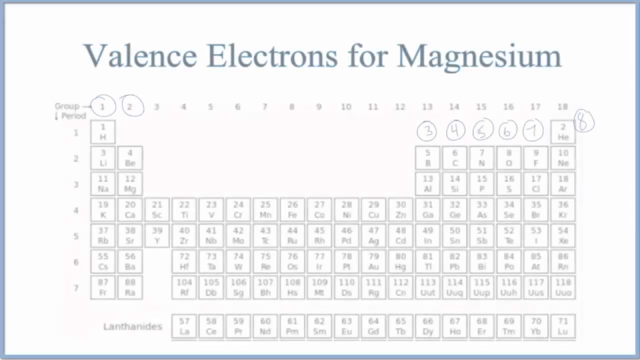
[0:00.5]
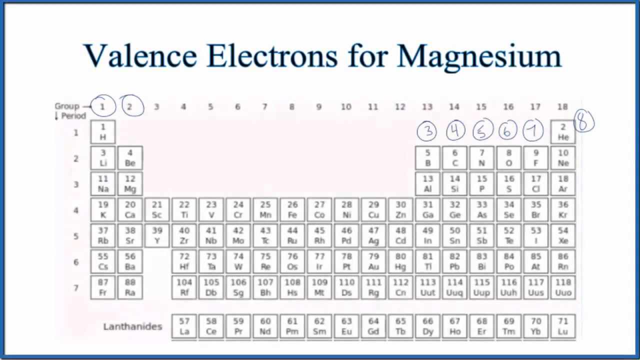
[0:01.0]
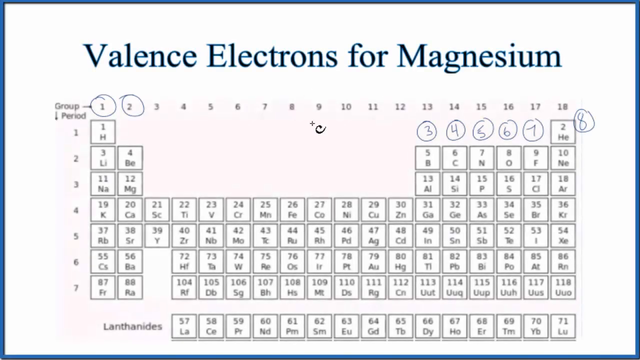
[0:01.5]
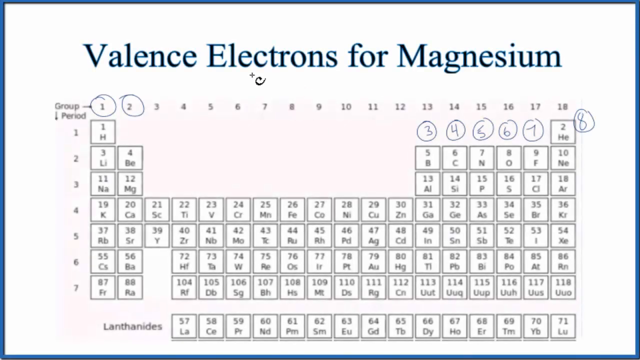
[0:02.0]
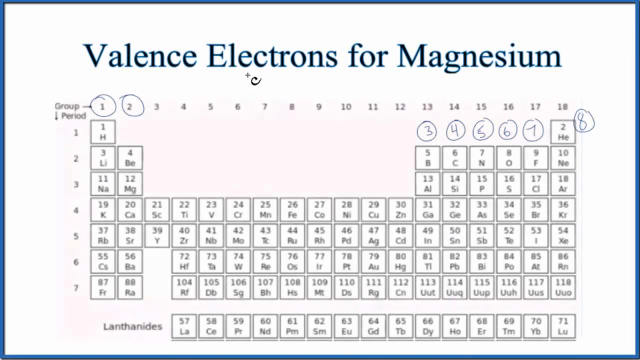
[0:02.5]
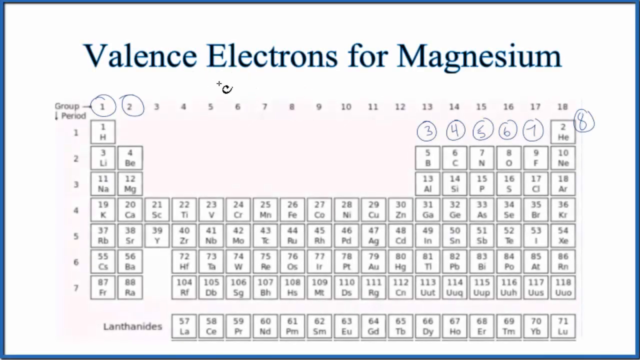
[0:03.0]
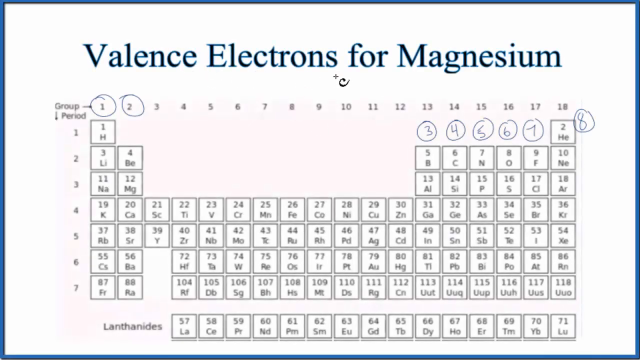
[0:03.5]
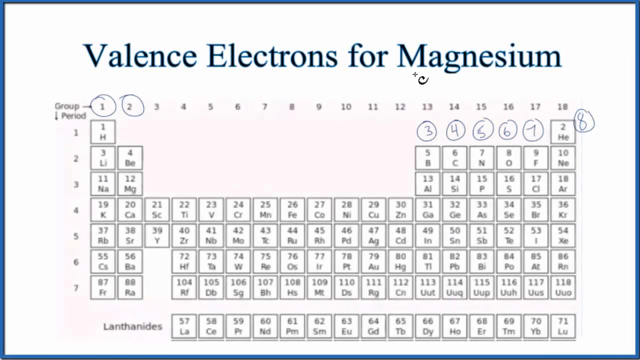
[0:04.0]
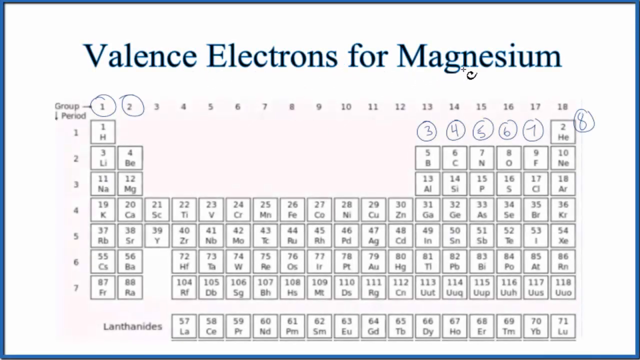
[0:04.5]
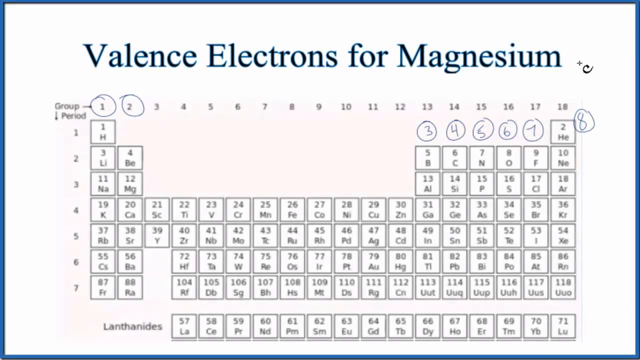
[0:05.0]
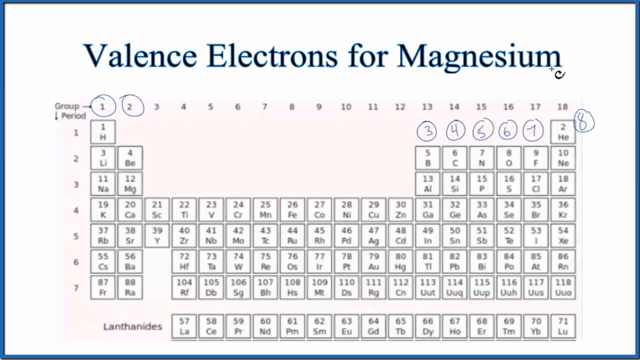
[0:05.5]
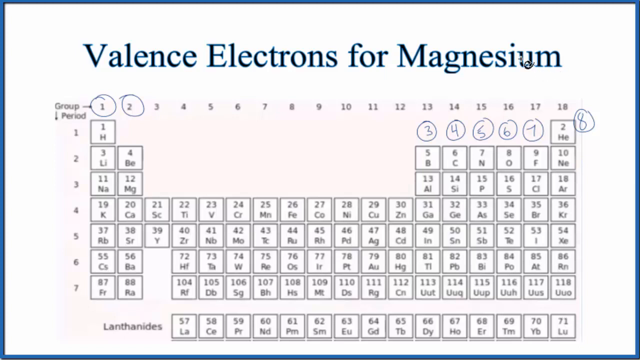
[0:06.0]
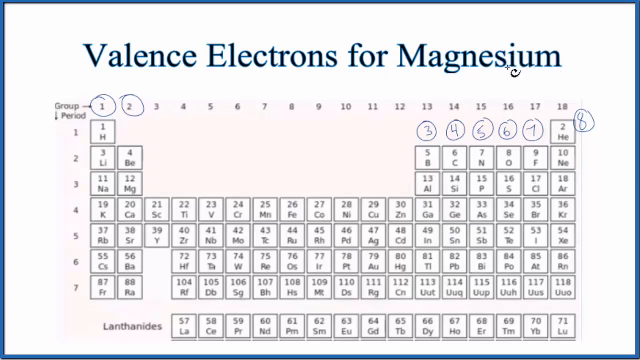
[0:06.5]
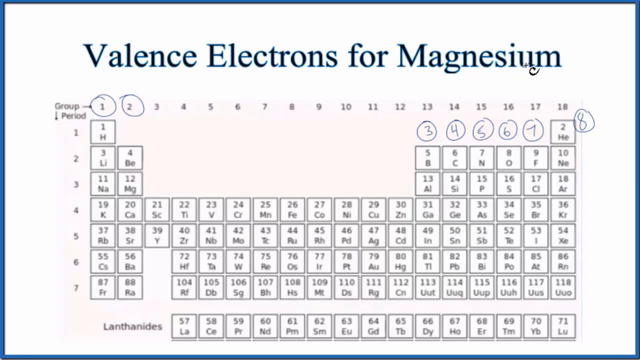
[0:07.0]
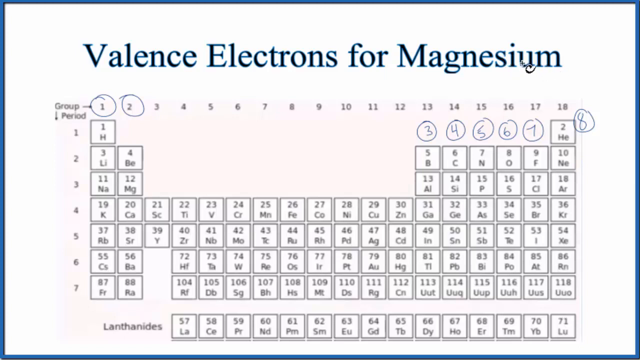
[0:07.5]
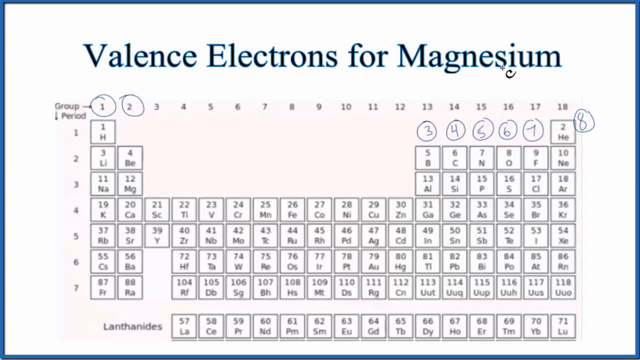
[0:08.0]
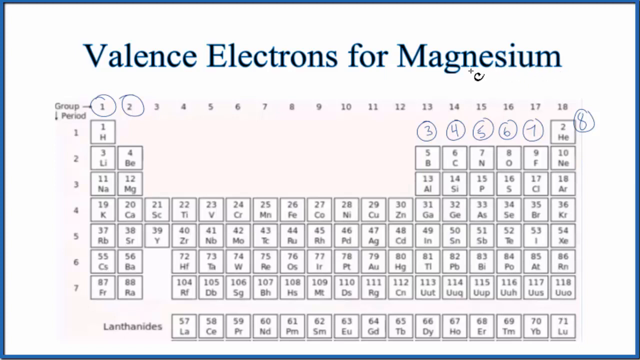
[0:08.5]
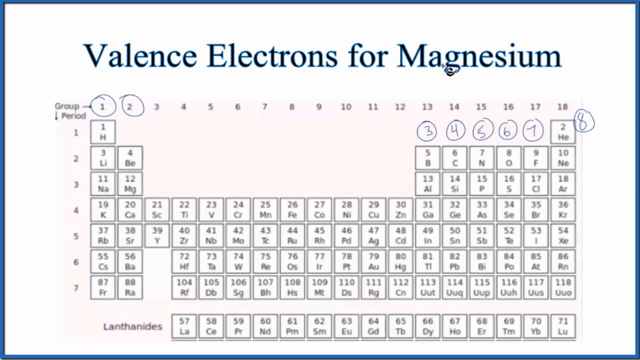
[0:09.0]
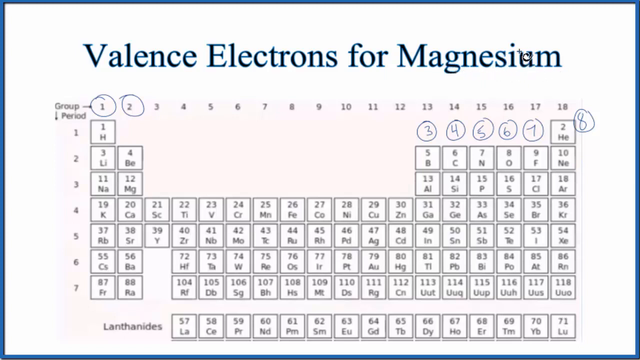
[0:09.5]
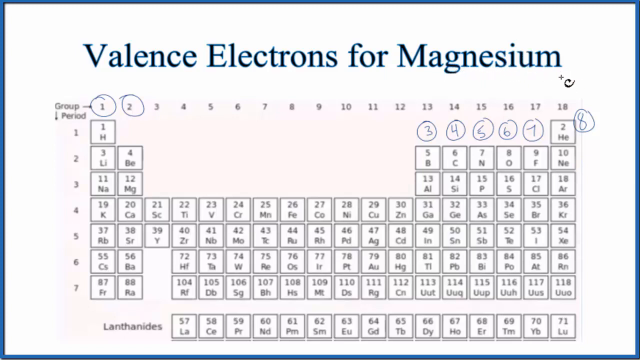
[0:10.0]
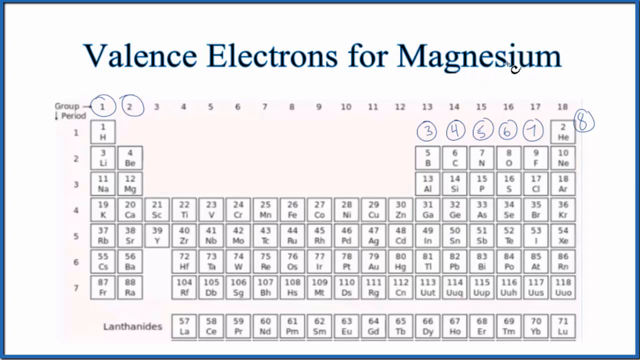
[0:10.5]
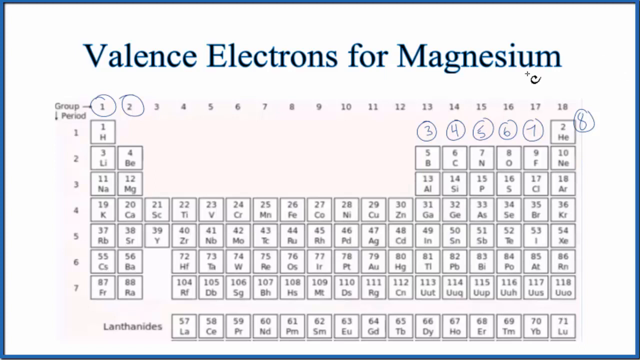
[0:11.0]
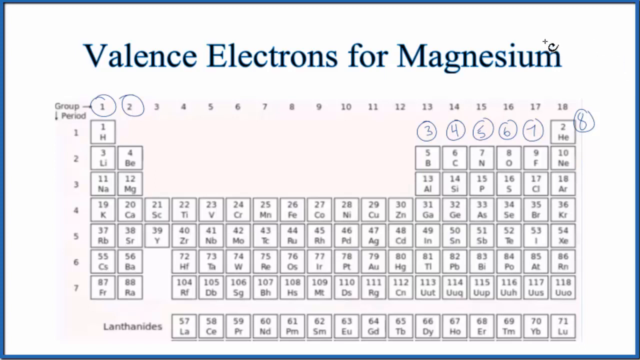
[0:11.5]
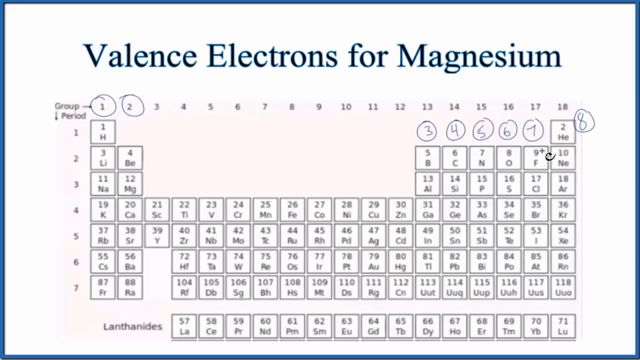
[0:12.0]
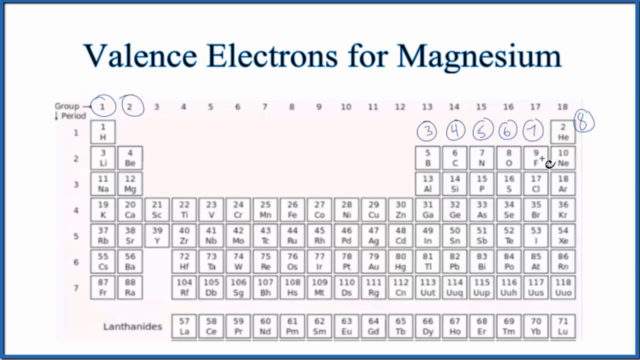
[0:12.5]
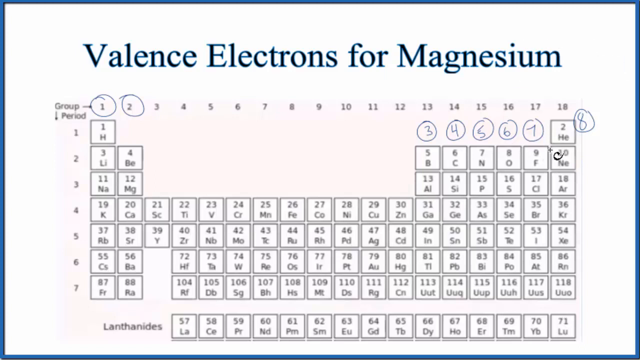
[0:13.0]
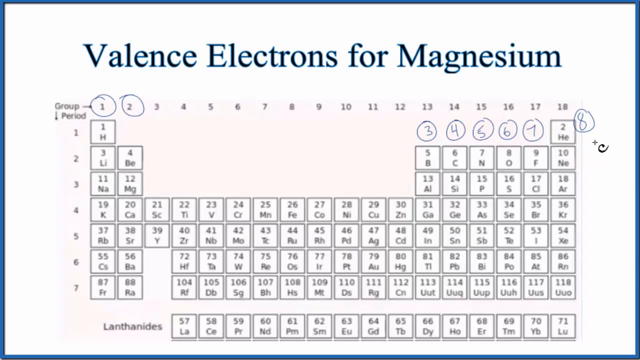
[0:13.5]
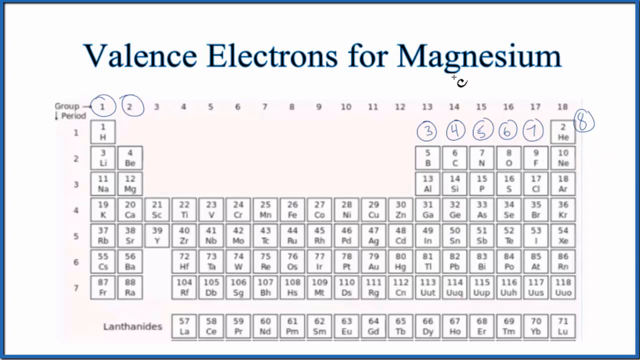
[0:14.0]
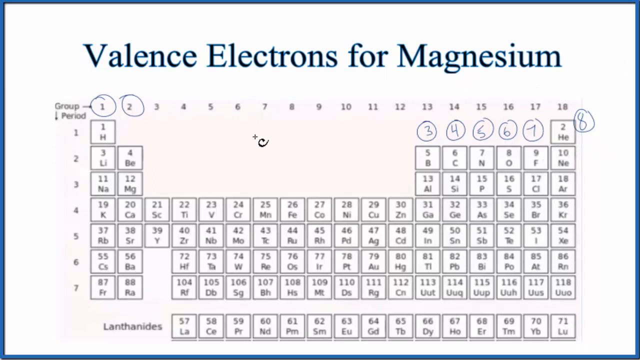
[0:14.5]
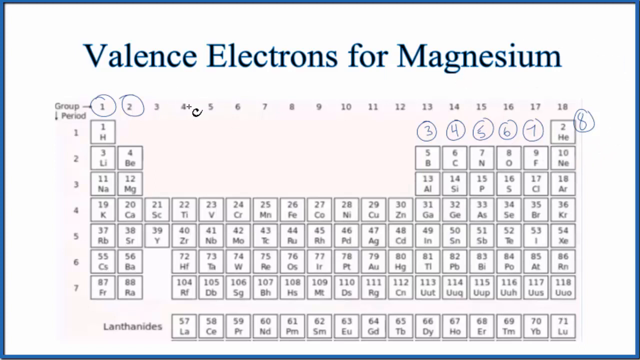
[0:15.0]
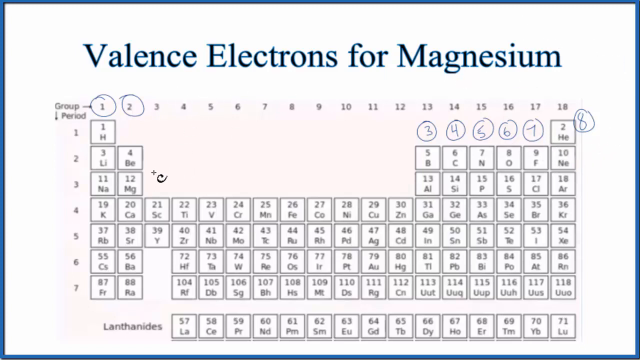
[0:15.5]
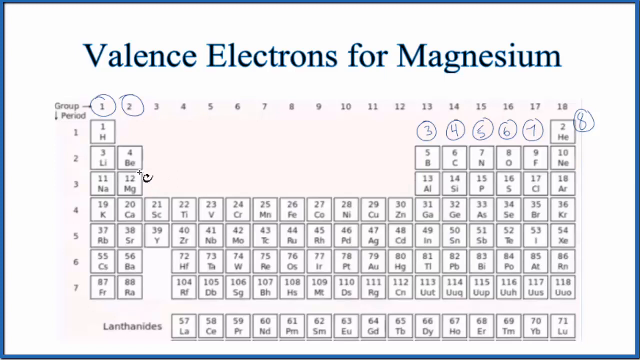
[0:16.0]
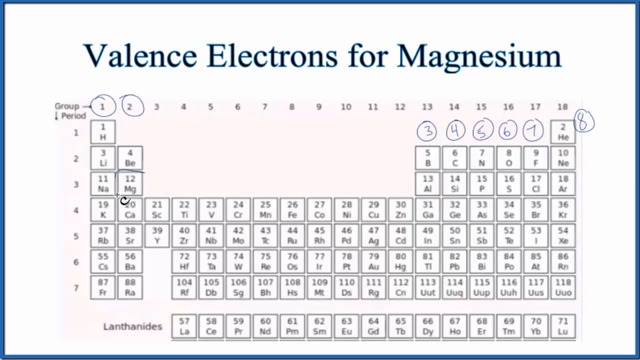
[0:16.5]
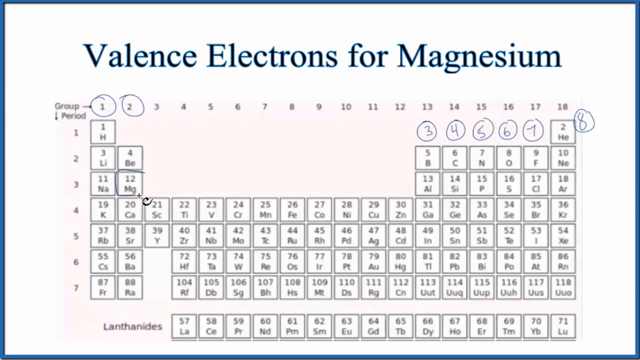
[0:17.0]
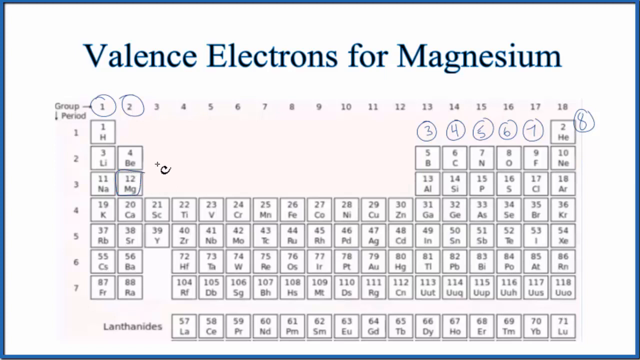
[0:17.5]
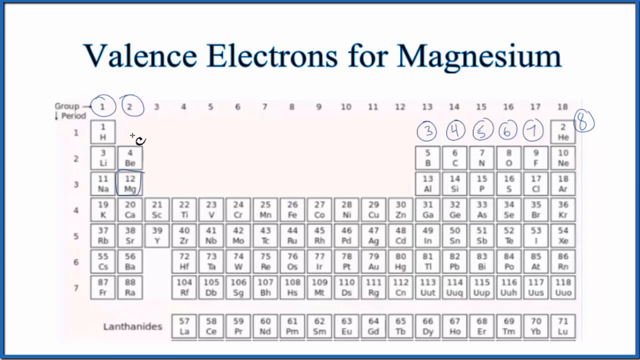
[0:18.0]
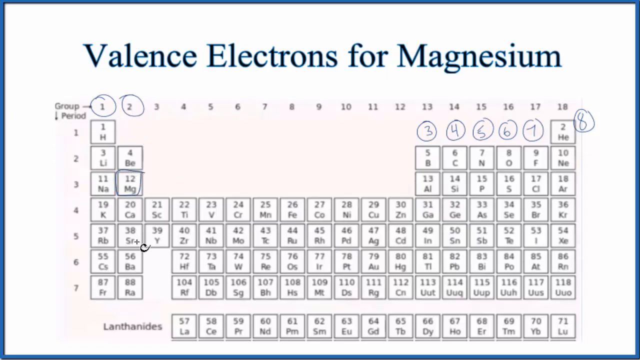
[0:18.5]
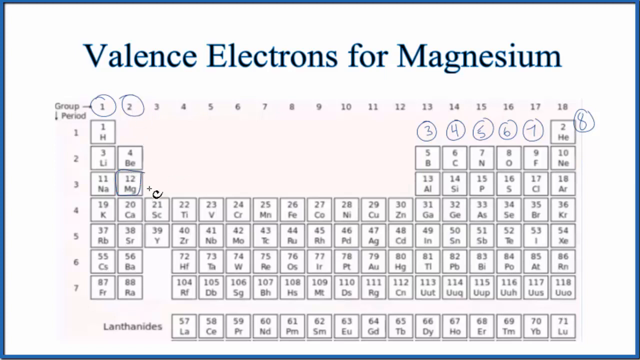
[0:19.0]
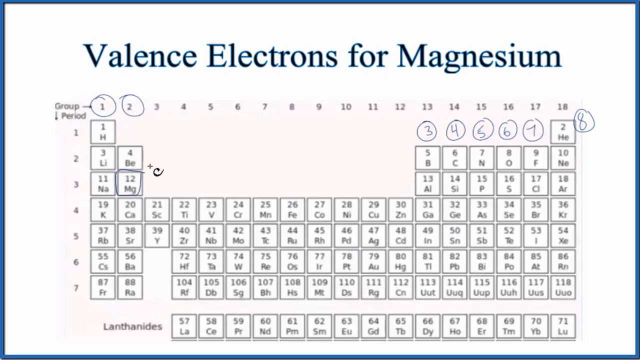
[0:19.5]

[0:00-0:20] A periodic table appears to fade in at the beginning. At the top, a title in black text reads "valence electrons for magnesium." At the top left of the table, the word "group" points to the right and the word "period" points downward. Each column seems to have a number at the top, from 1 through 18, and the rows are numbered 1 through 7. At the very bottom are elements 57 through 71, with "lanthanides" written next to them on the left. A black cursor that looks like a plus sign with a C at its bottom right moves around. It first goes up and highlights the title from left to right, then appears to hover over "magnesium," moving to its right and left before making a counterclockwise circle around it. The cursor then goes down to the 17 and 18 columns, then to the 4th and 8th columns, and circles around. Next it goes to magnesium, number 12, in the second column and third row. The square reads "12" with "MG" underneath, and the cursor draws a small black circle around the square, starting from the top right and going counterclockwise.